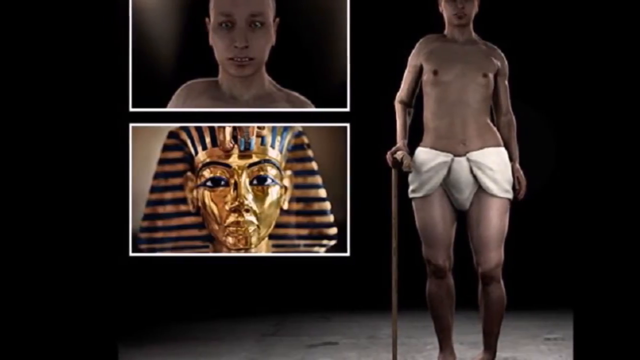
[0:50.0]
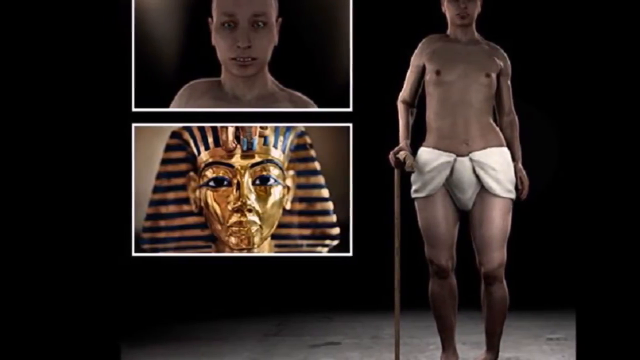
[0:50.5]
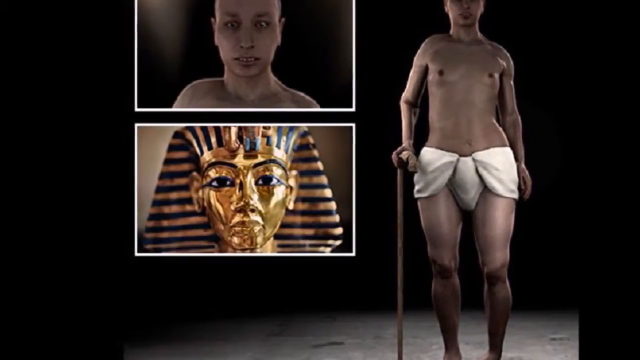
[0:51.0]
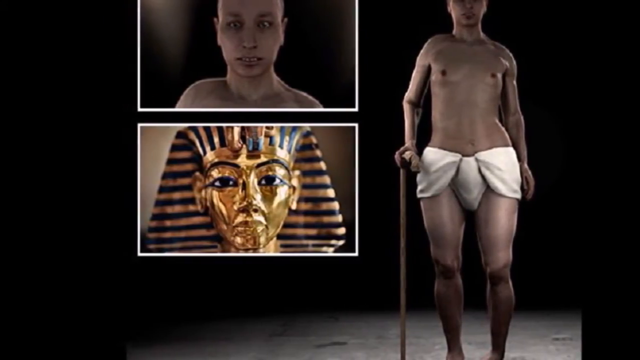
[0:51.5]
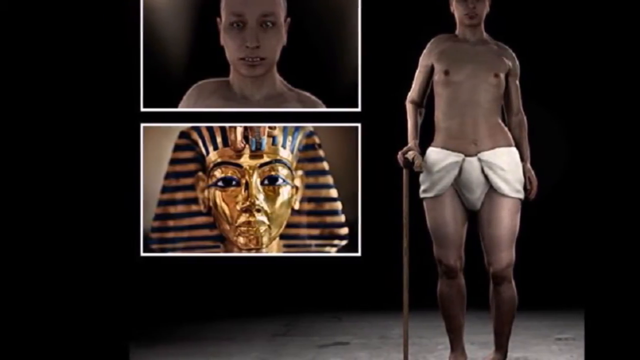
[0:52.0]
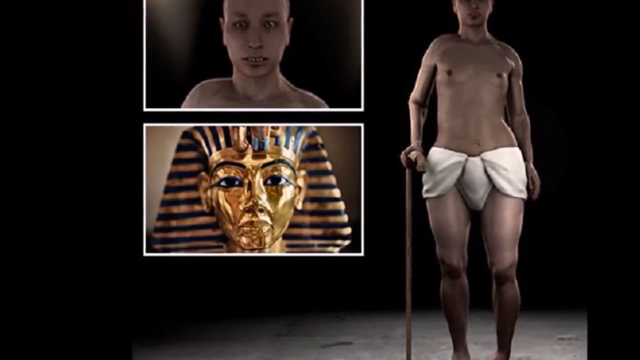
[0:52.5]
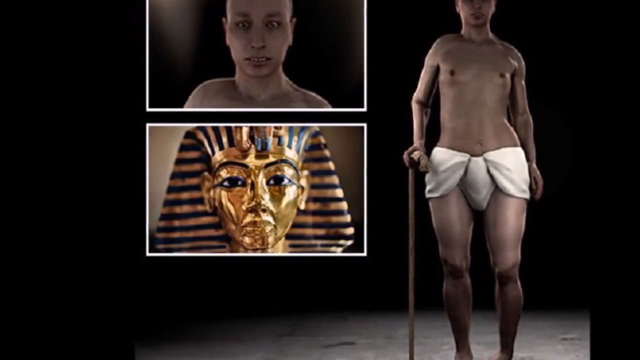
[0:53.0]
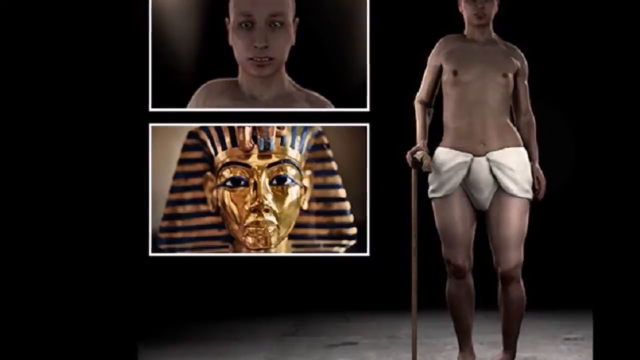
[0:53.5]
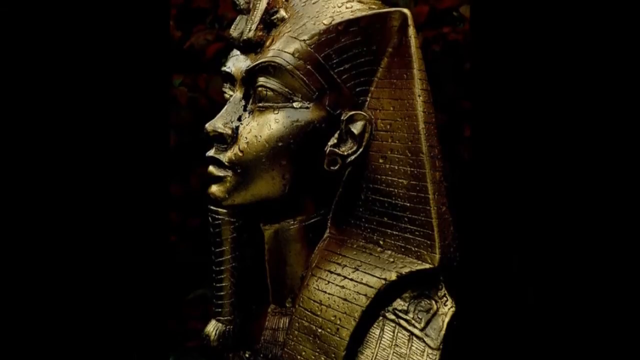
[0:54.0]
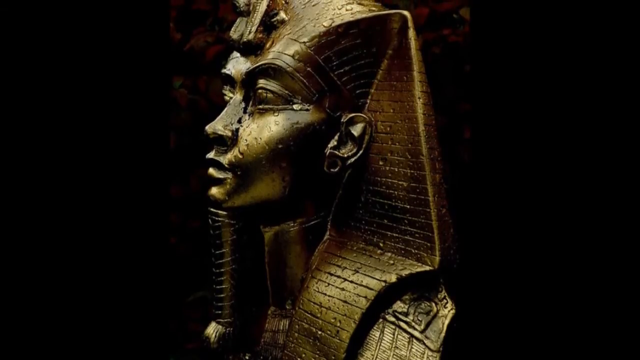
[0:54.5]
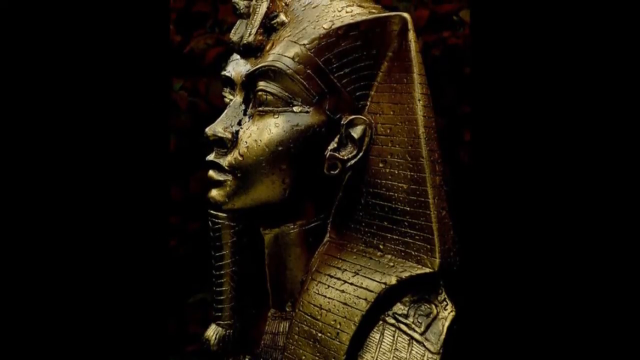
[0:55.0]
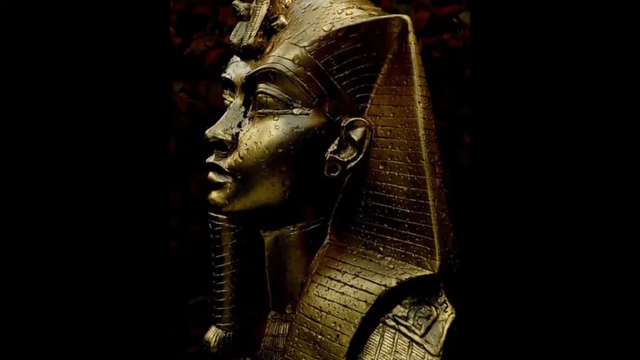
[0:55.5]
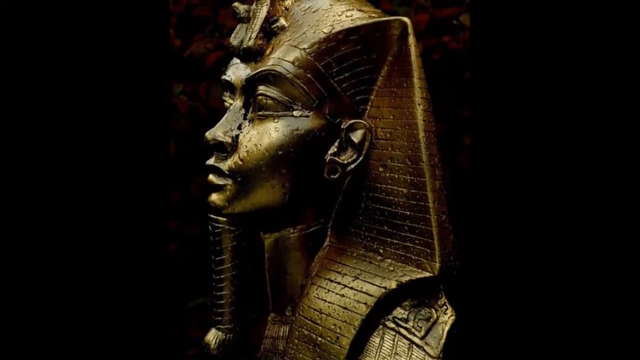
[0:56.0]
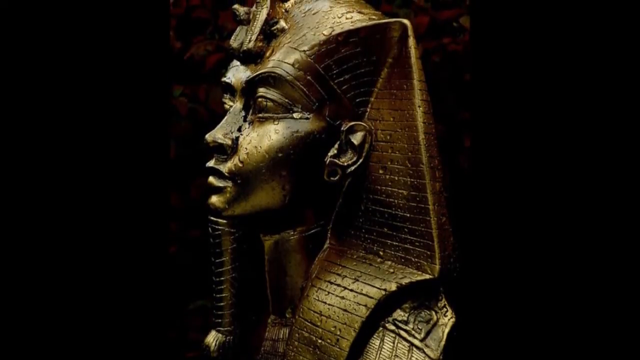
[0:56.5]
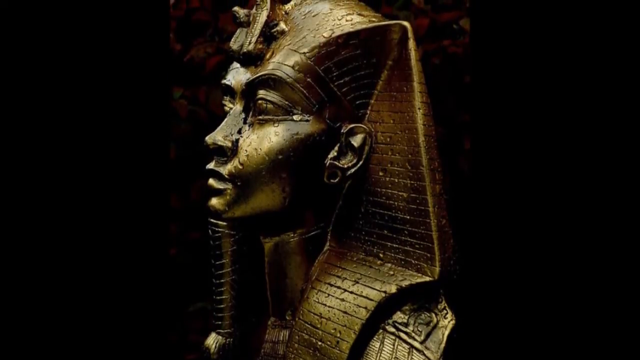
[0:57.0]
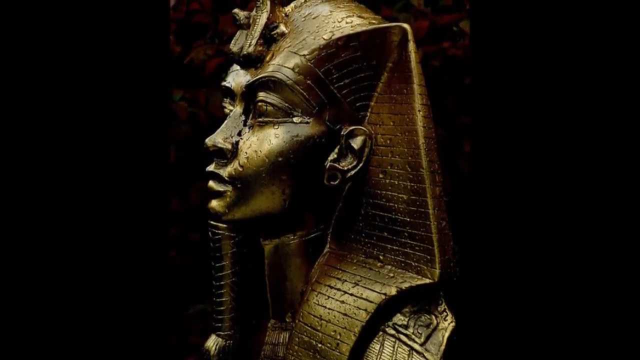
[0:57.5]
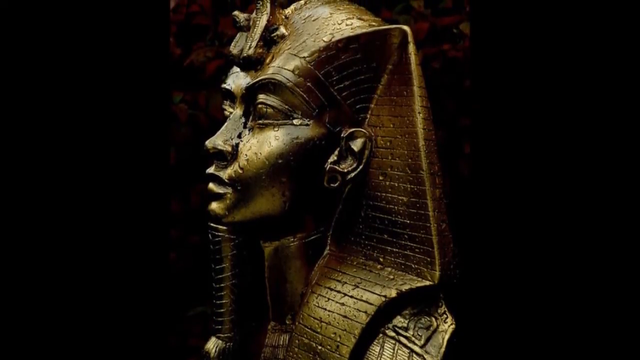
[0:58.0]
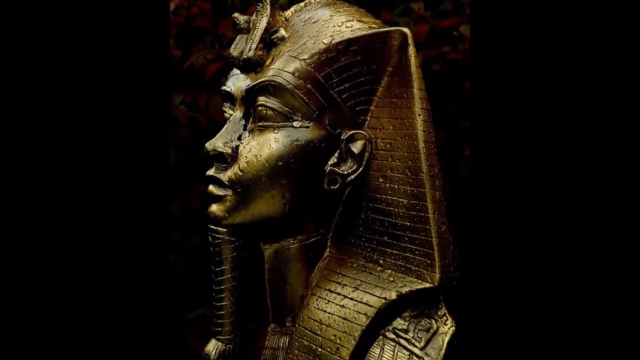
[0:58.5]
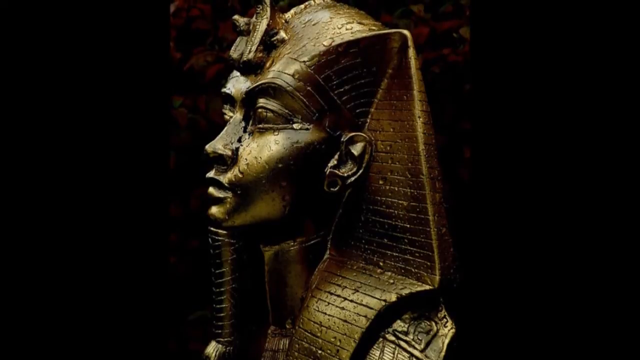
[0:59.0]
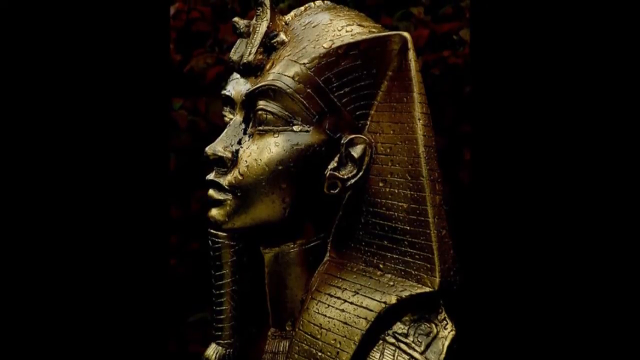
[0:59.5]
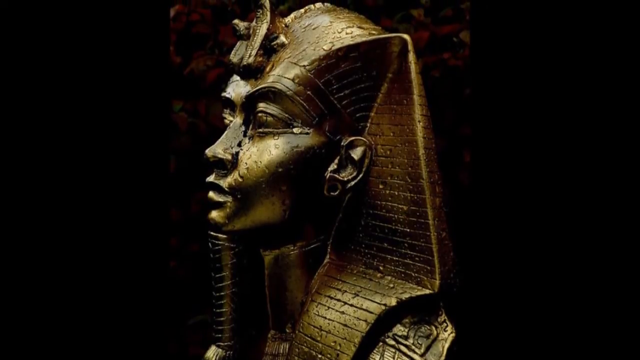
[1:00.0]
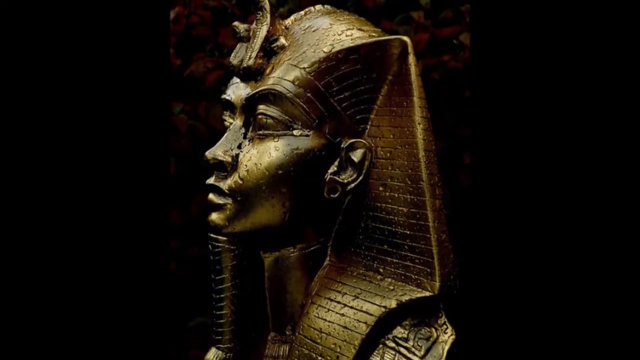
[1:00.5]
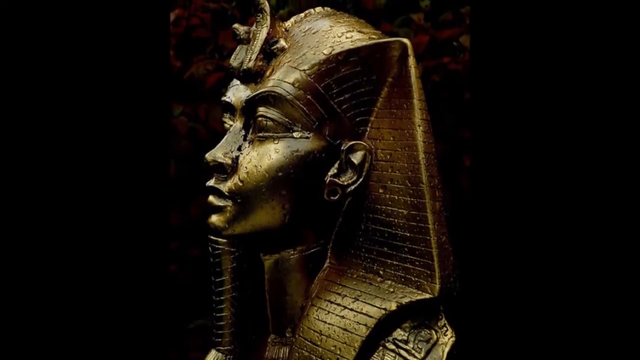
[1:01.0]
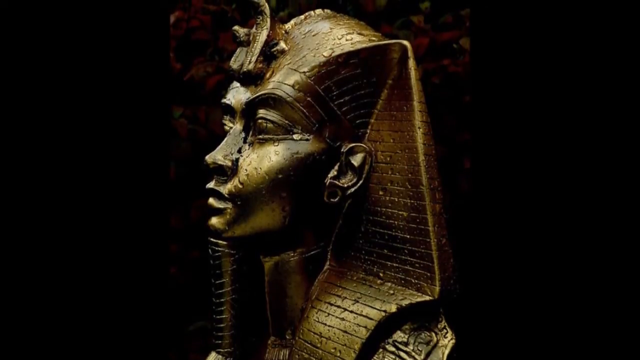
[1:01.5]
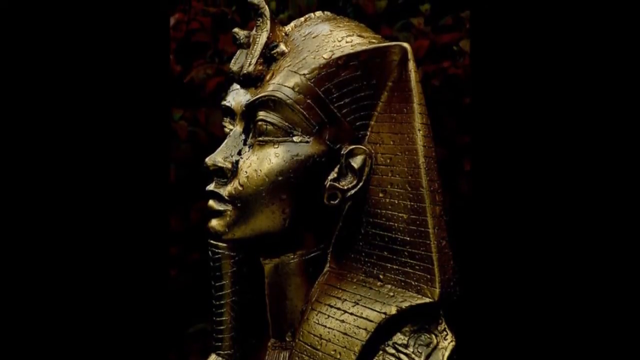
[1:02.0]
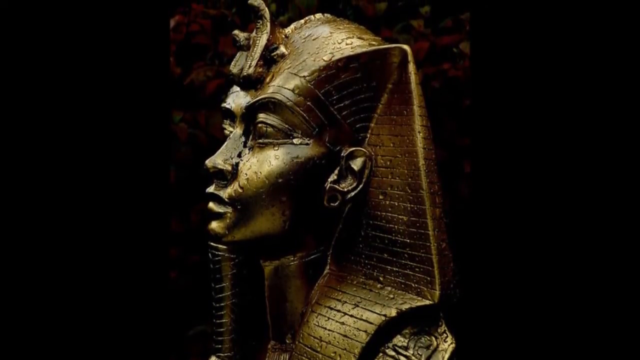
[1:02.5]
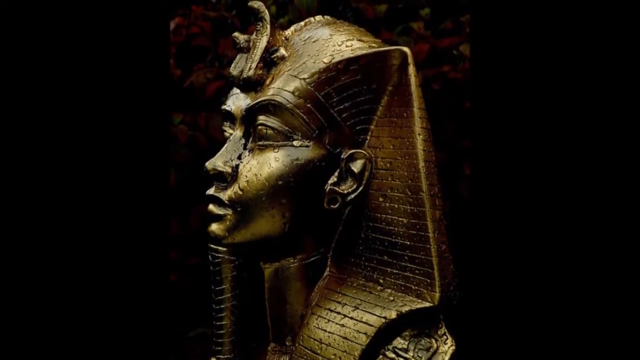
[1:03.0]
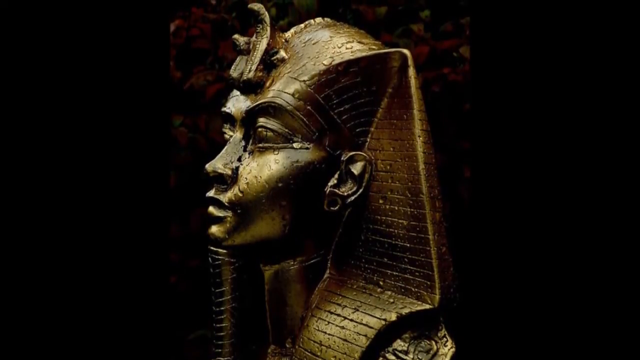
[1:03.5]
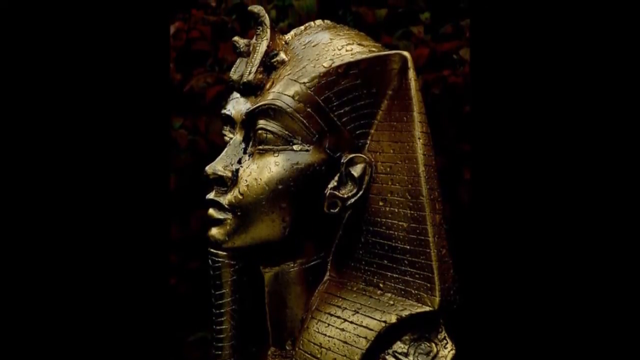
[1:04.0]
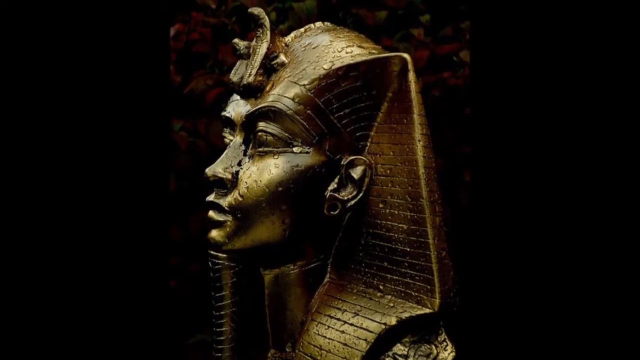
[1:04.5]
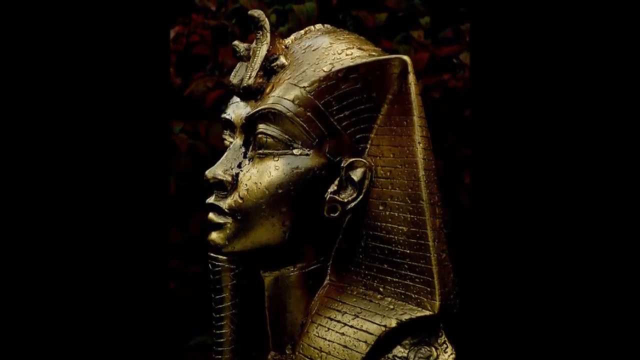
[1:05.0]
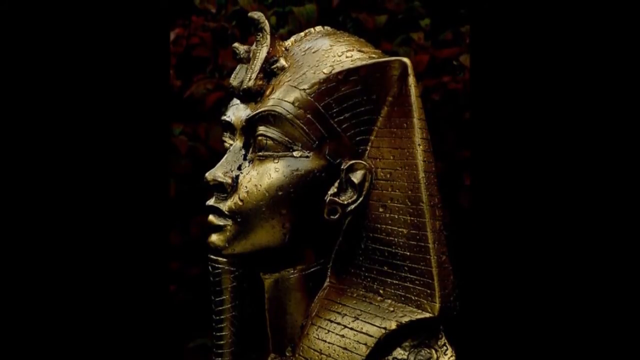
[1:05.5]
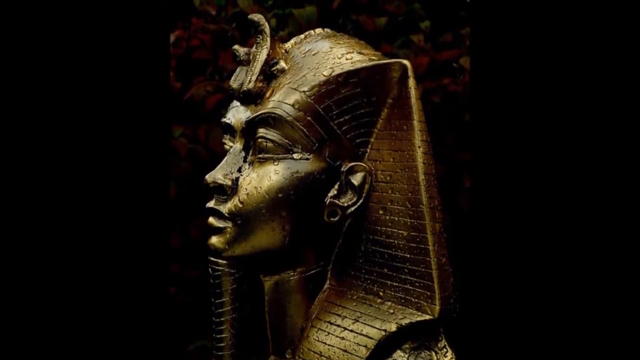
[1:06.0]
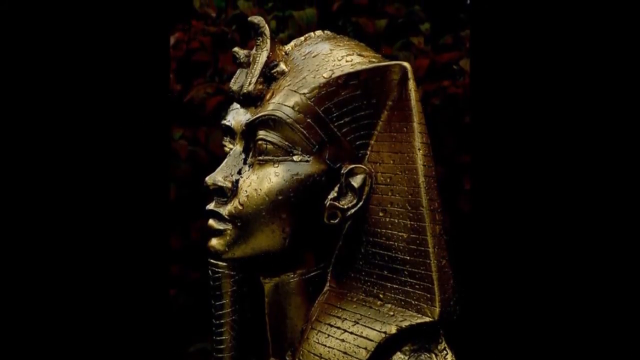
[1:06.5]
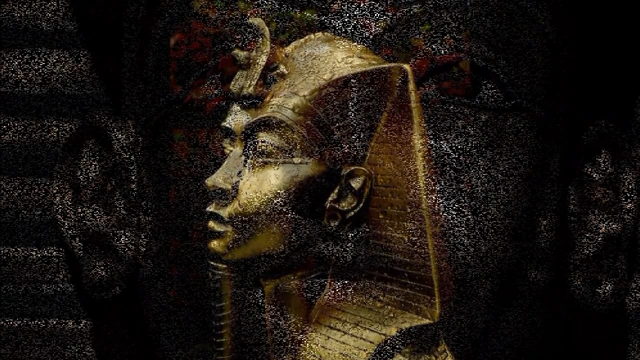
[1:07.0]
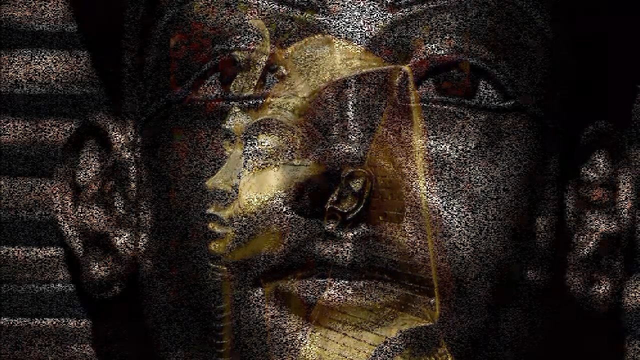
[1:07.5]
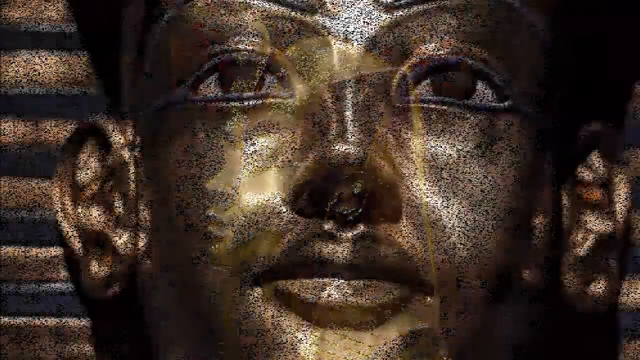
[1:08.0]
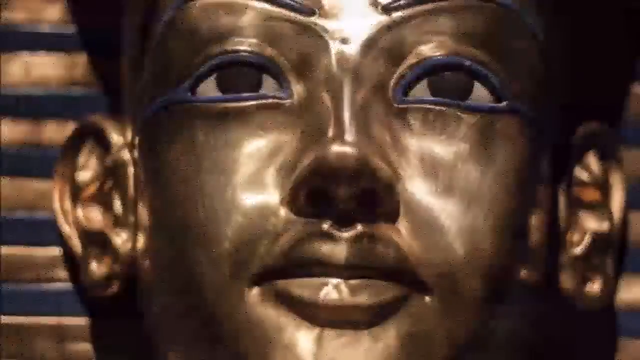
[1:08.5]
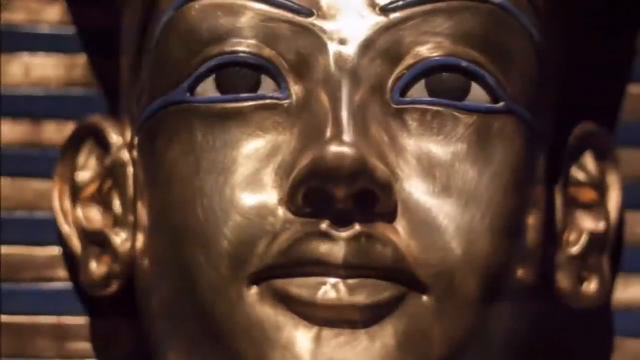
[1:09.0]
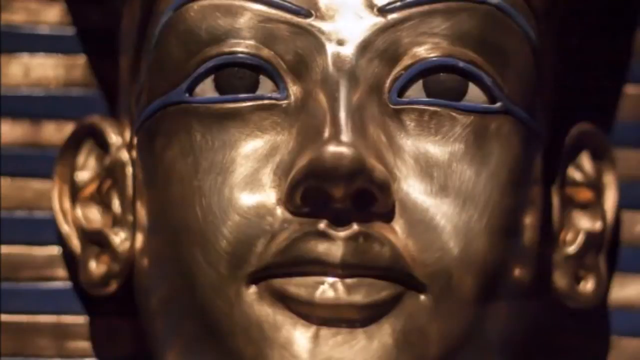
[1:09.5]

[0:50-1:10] Against a black background, a boy wearing only a loincloth is on the right side, supporting himself with a cane in his right hand, which appears on the left side of the screen. He is visible from the nose down to his ankles, standing and facing the viewer with his left hand at his side. At the top left are two pictures: the full face of a boy, possibly the boy on the right, who is bald, looks like a teenager, and shows his top four teeth; and below it, in a white rectangle, the golden face of the pharaoh Tutankhamen's tomb. The video pans to the left, so the images slide to the right. It then transitions to a golden picture of King Tut's tomb face facing toward the left. It has a beard, the piece behind the head, and two snakes on the head. The video pans upward to the top of the face. A white, grainy transition follows, leading to a close-up of King Tut's face showing only the nose and mouth, not the forehead or chin, with the ears on the left and right. Horizontal blue and golden lines are in the background.